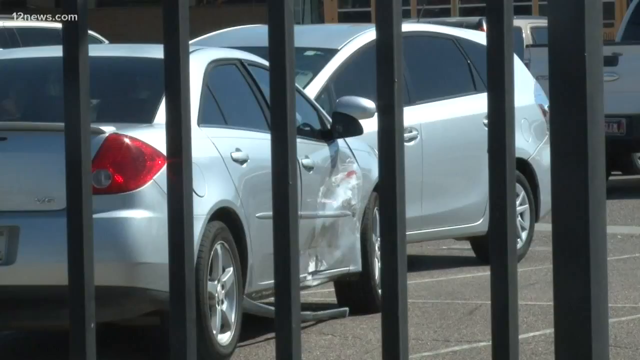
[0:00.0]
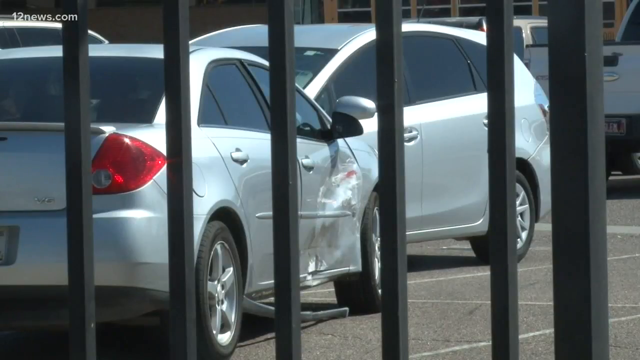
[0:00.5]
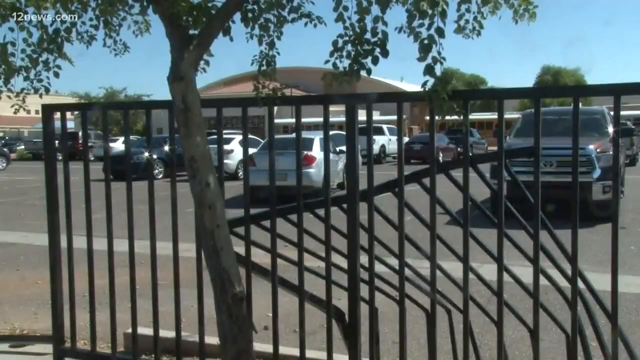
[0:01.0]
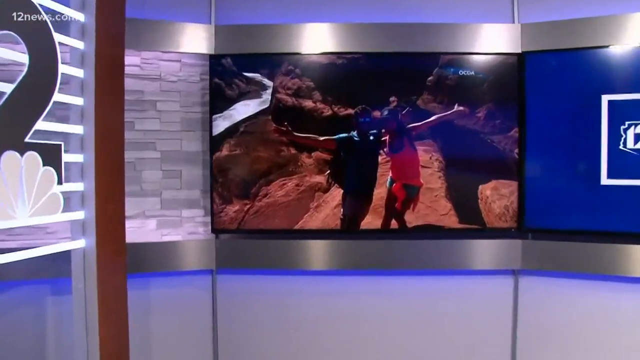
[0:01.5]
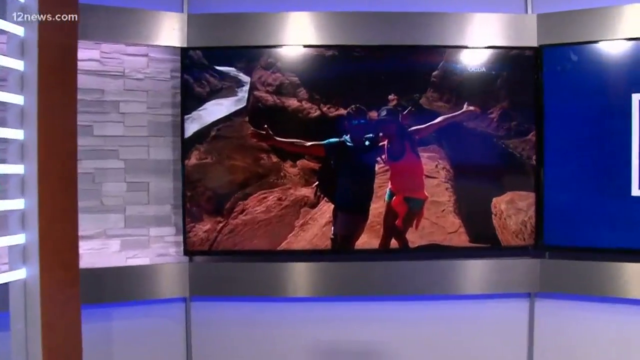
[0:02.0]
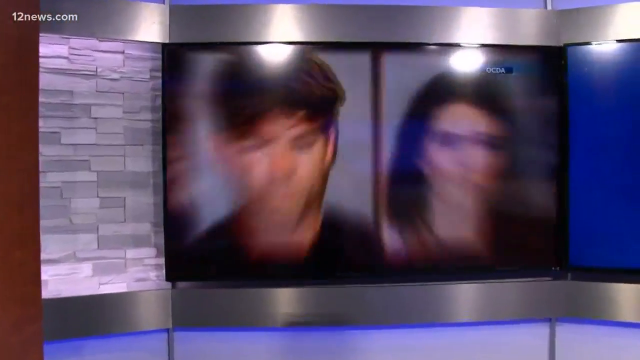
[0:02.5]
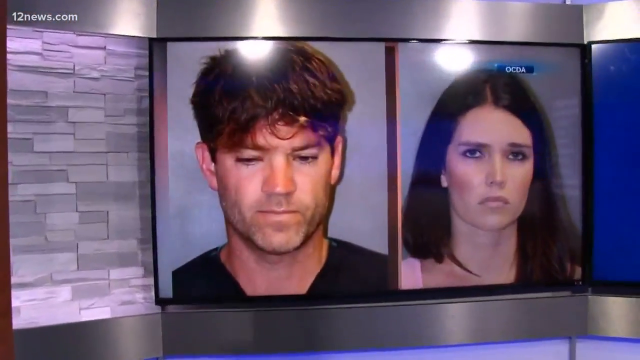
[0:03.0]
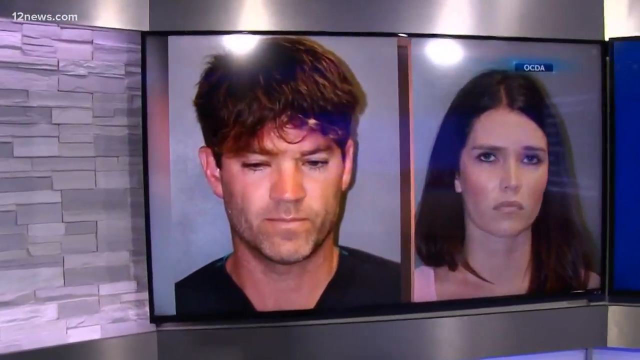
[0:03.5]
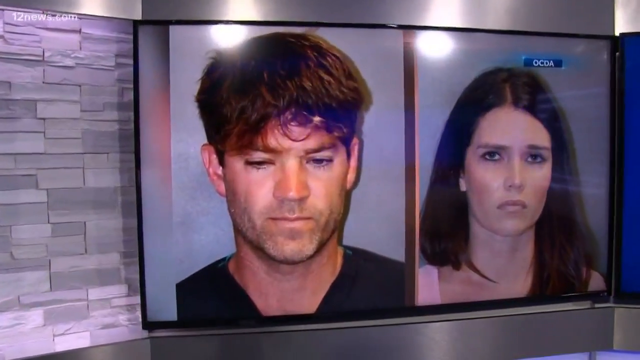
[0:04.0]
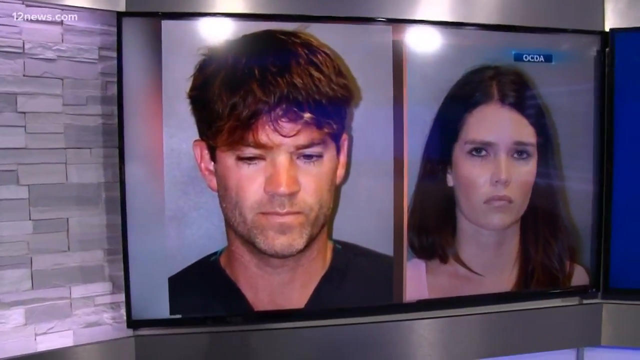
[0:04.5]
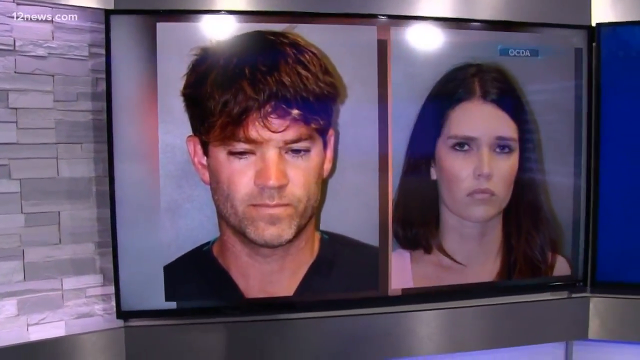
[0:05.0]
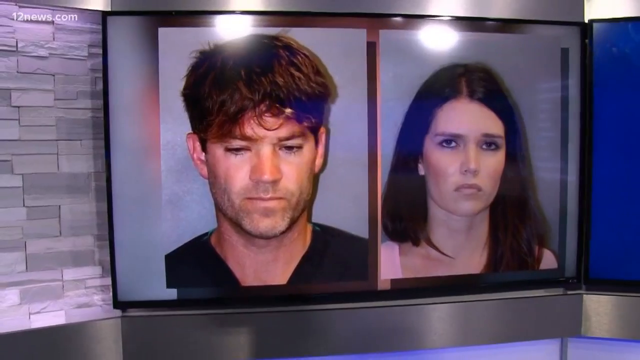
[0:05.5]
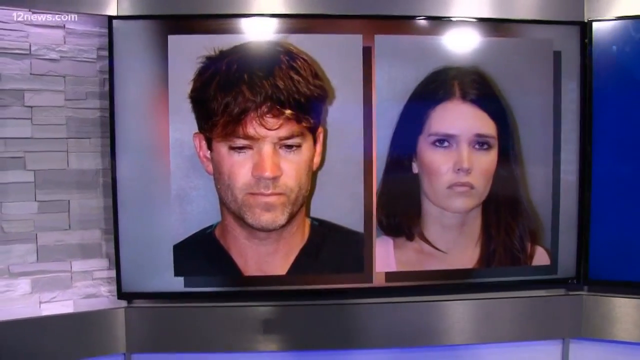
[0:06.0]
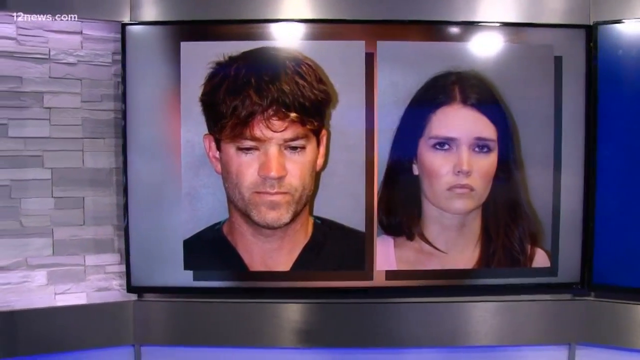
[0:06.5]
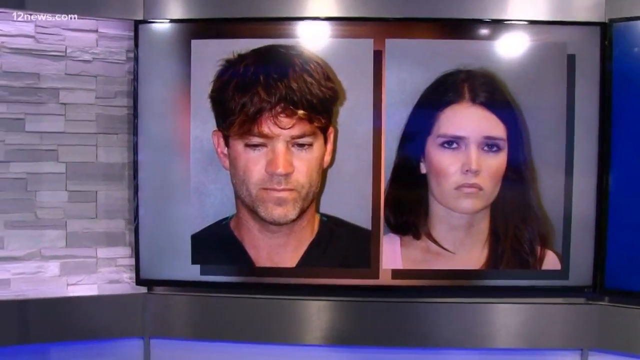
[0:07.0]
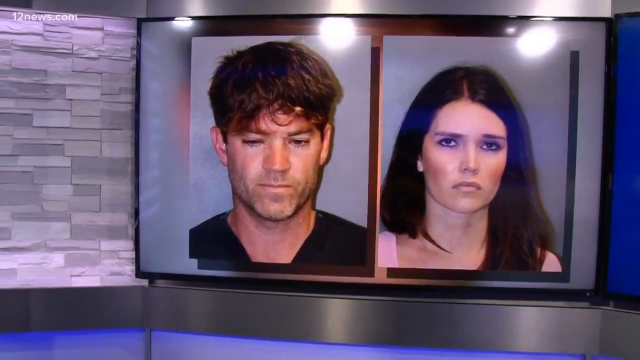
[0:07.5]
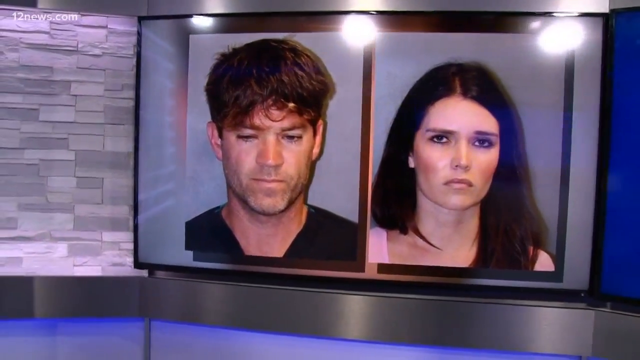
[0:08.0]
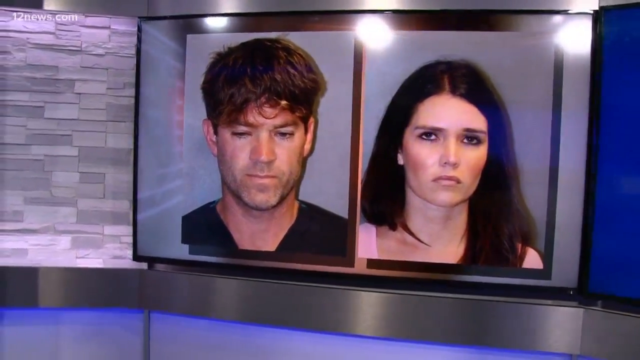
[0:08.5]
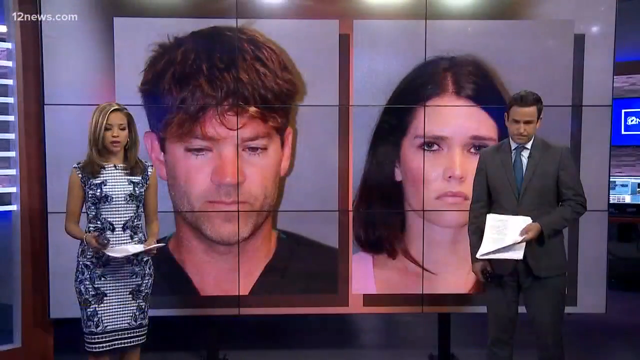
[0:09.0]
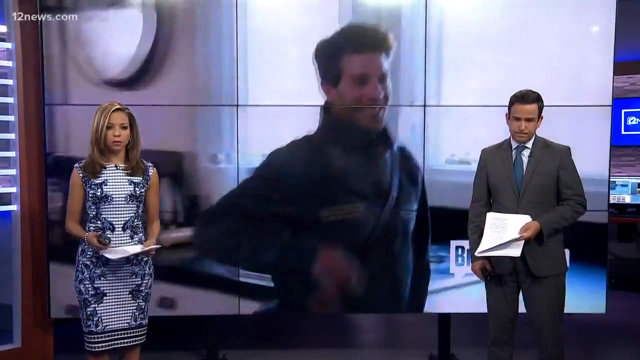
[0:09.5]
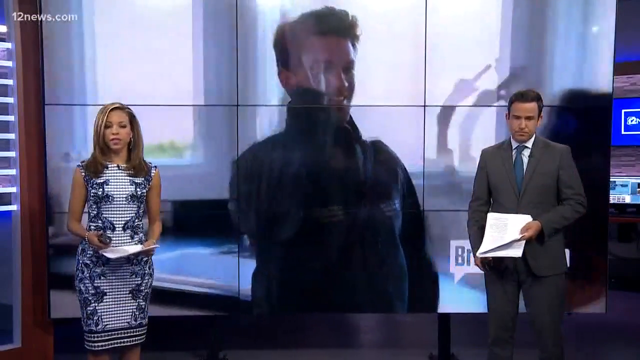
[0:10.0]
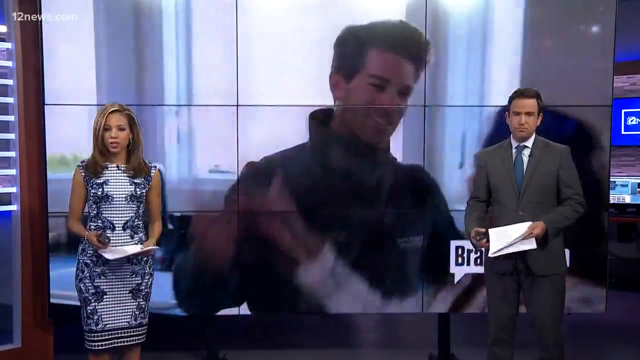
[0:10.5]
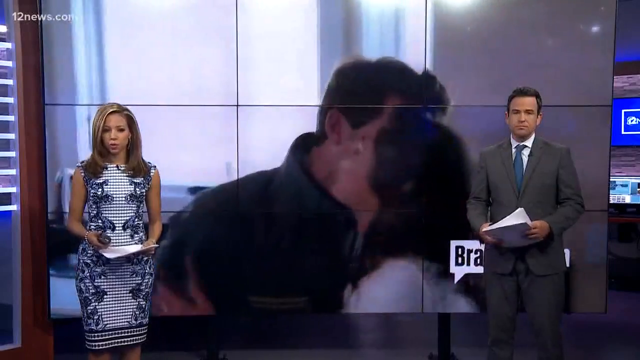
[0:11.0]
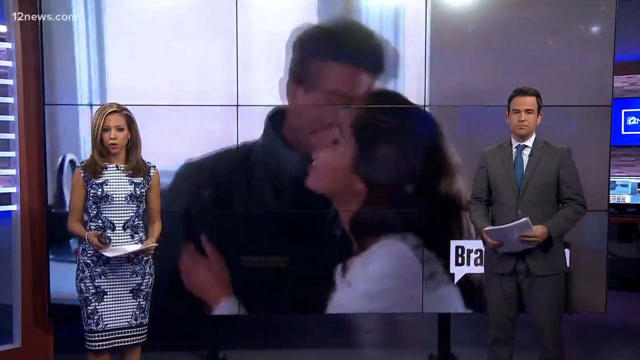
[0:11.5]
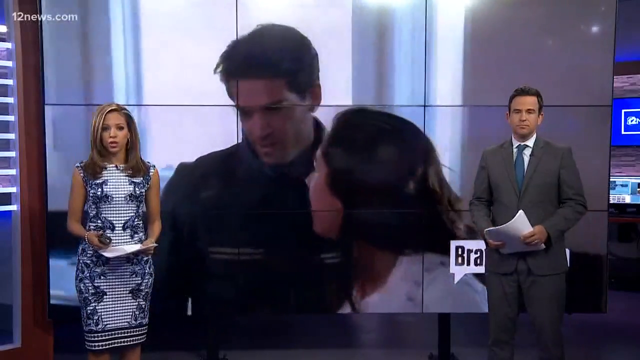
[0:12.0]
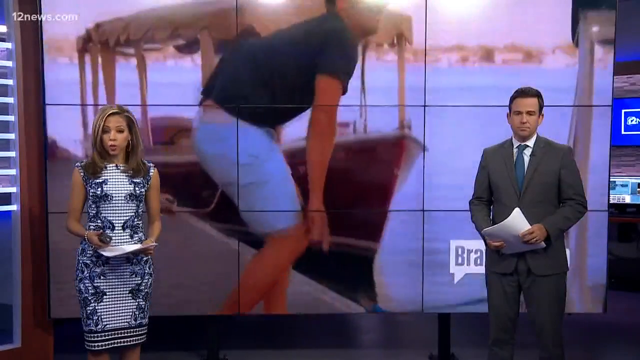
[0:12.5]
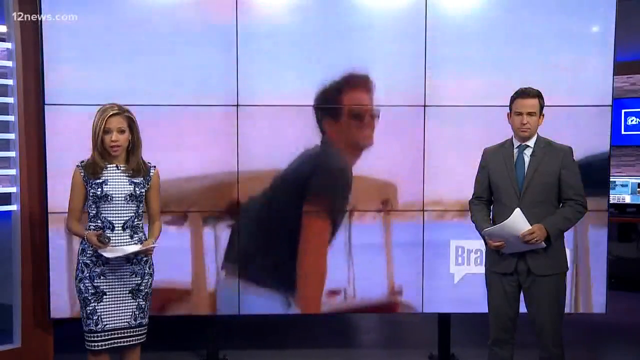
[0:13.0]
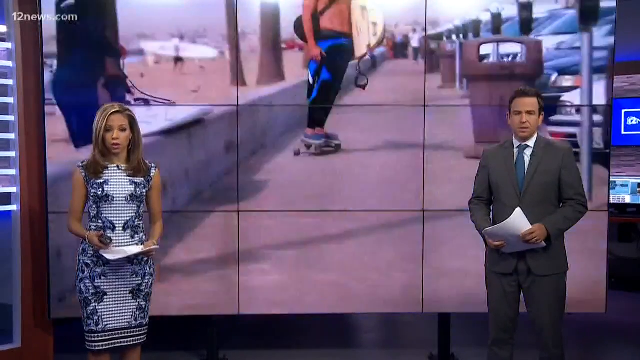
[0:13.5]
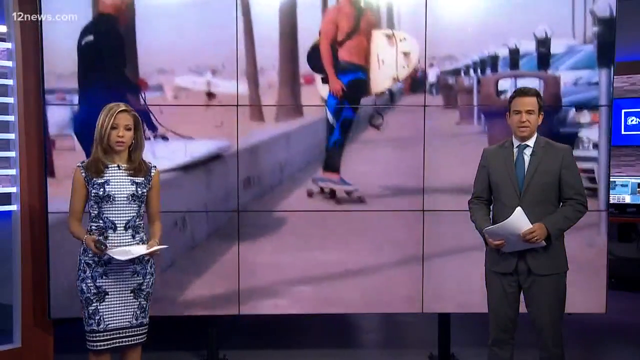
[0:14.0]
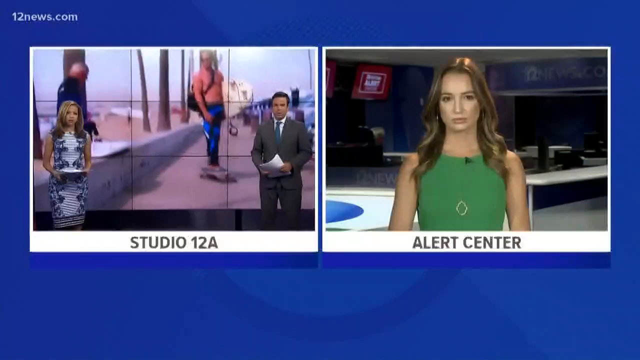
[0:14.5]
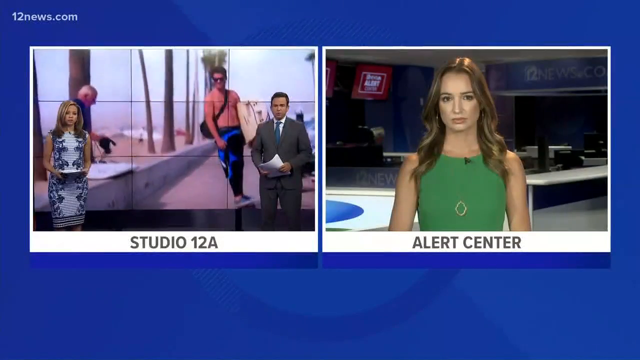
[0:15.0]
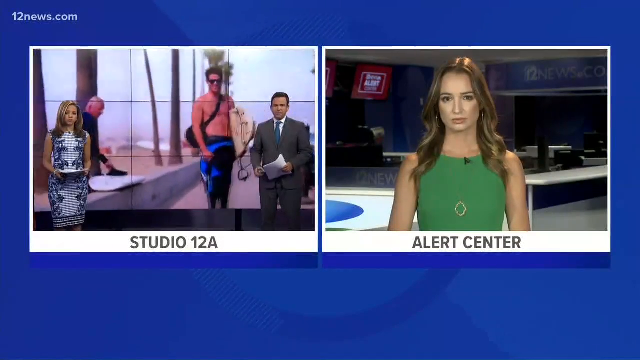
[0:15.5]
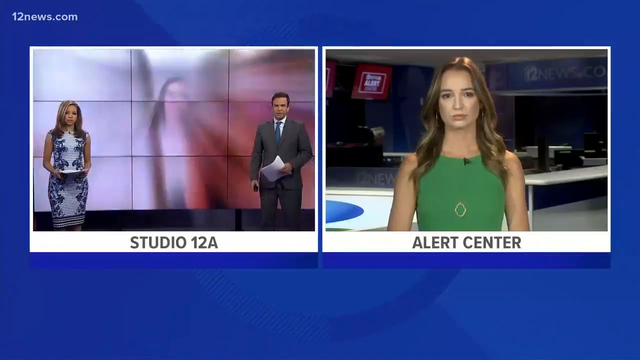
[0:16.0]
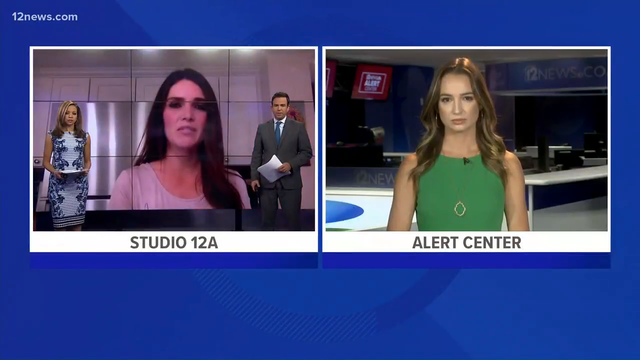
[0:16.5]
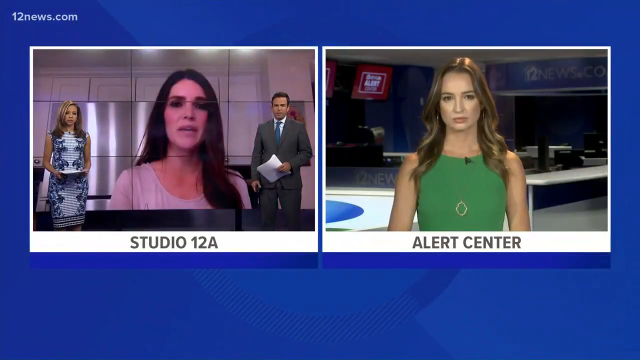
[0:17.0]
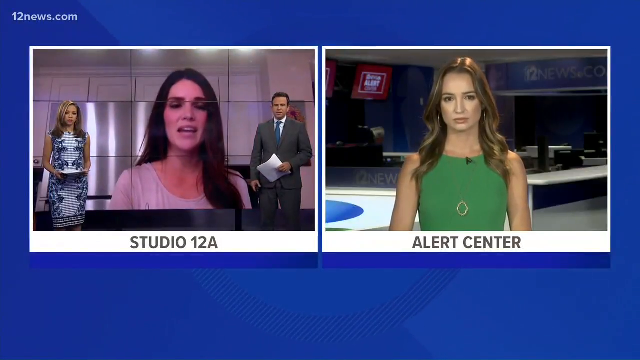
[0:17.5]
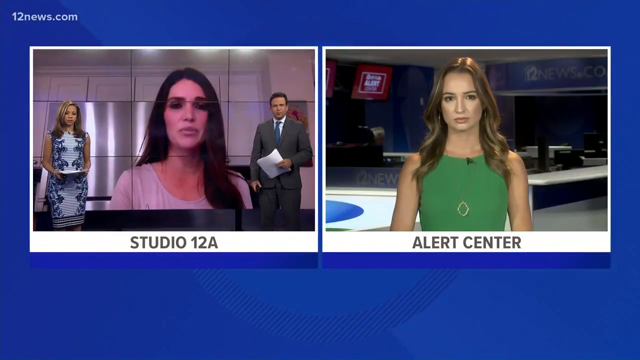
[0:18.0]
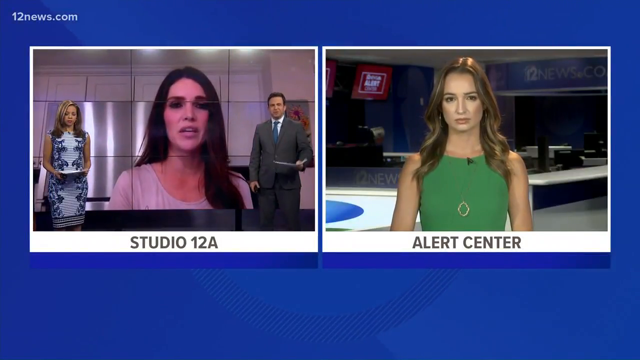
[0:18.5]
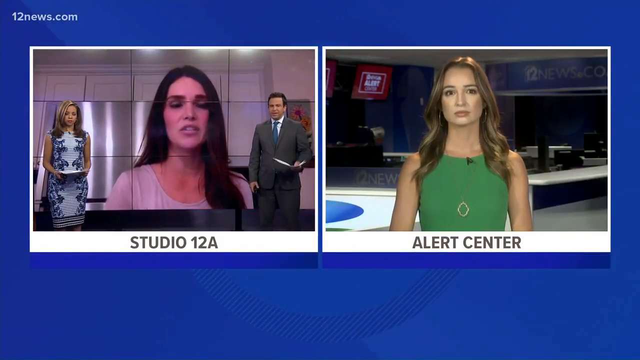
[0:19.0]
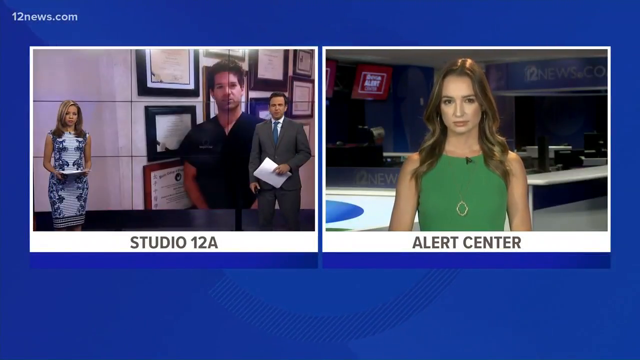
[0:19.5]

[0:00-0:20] An animated picture shows two cars, one with a dent in the door. On the right side are the bars of a gate: black bars and another gray bar. The video then moves into an animated introduction for a news station, with a lot of blue; it looks like a Channel 12 news station. The color is light bluish at the bottom and a little darker at the top, and the 12 is in a white square. Next comes a photograph of two people on a monitor, a man and a woman. The woman, on the right, has black hair and wears what is kind of a pink shirt; the man, on the left, has brown hair and wears a black shirt. The camera focuses in and out and shows two news people standing by the monitor or another monitor. The man wears a green suit and a bluish tie; the woman wears a white dress with little blue flowery things on it and has streaks in her hair. A camera view shows two people hugging and kissing, followed by a view of the man outside at a beach wearing sunglasses. Then the screen says "alert center".